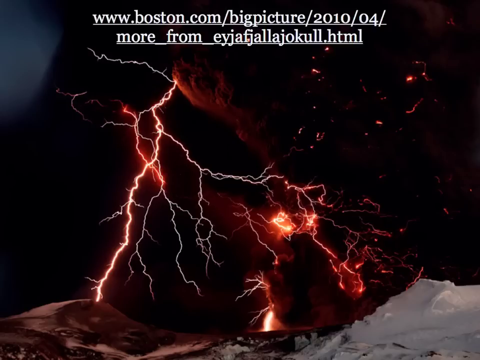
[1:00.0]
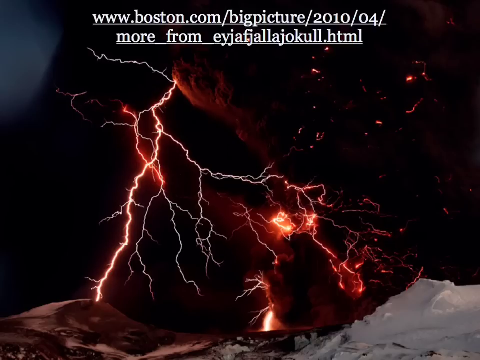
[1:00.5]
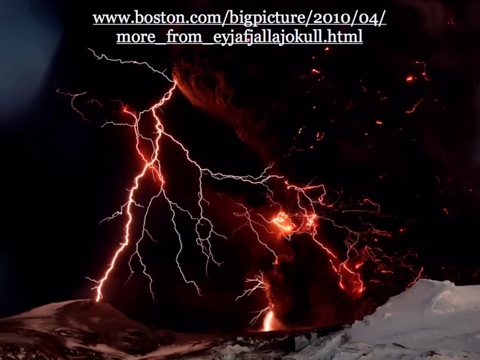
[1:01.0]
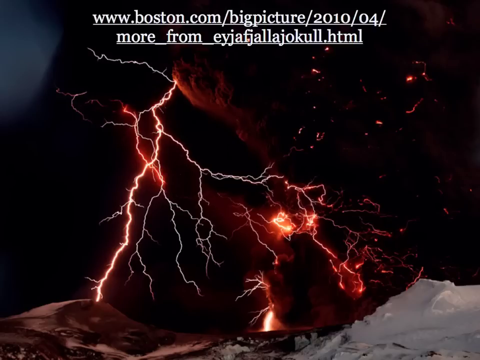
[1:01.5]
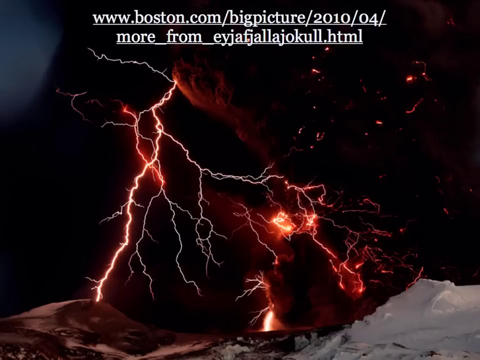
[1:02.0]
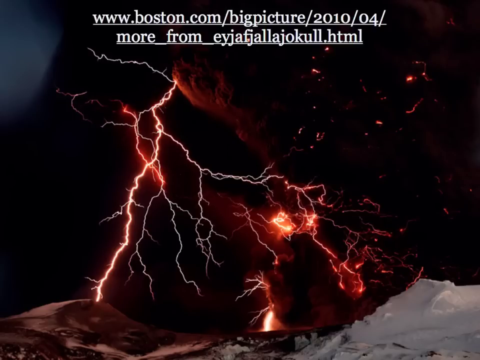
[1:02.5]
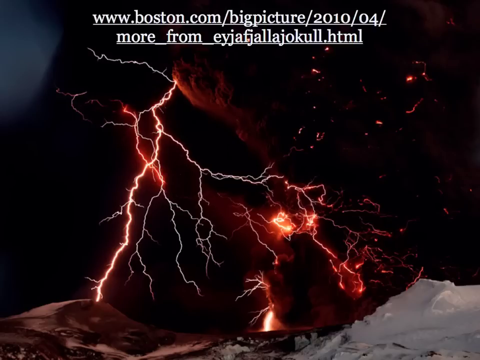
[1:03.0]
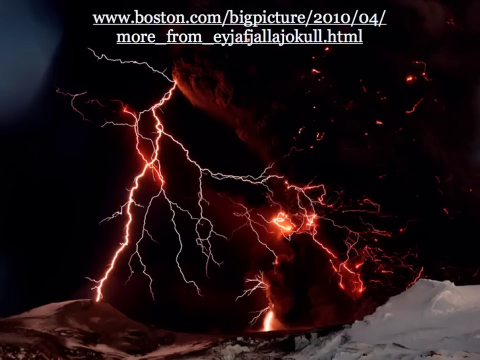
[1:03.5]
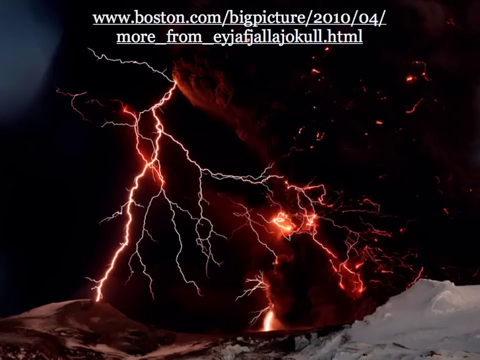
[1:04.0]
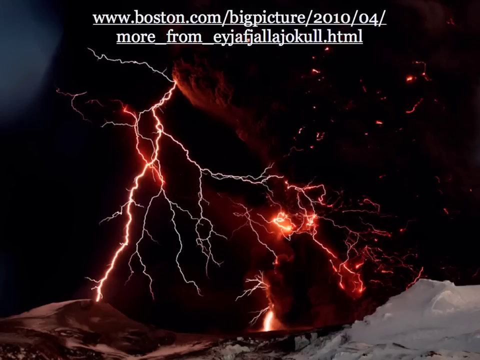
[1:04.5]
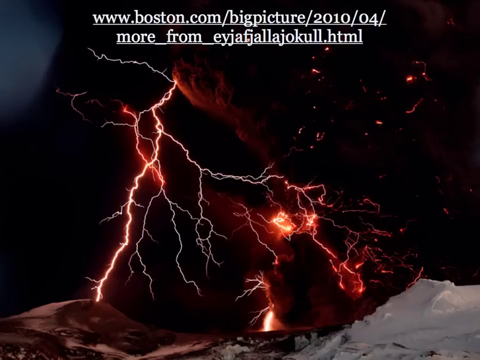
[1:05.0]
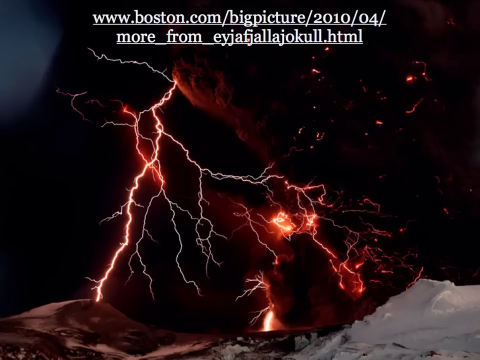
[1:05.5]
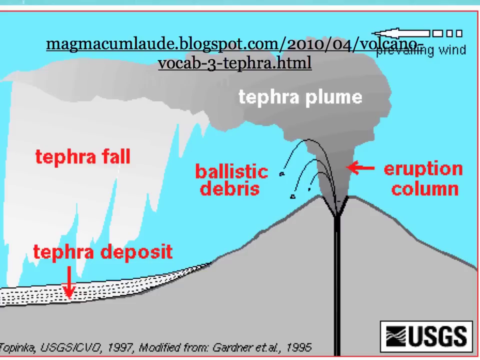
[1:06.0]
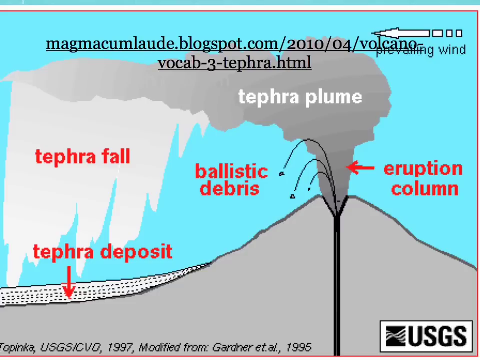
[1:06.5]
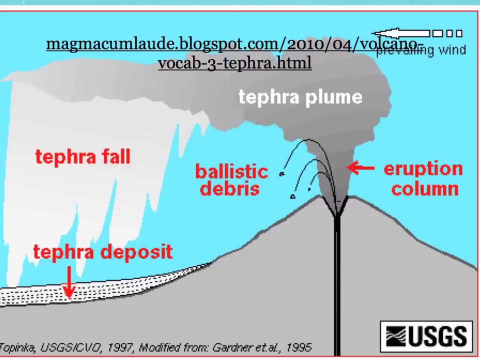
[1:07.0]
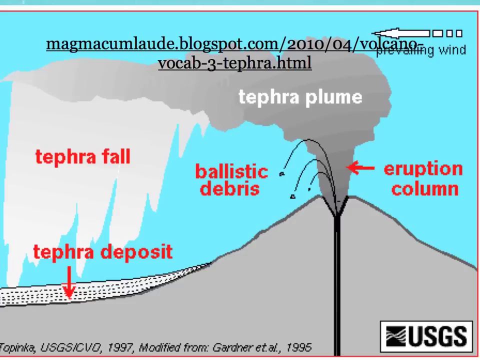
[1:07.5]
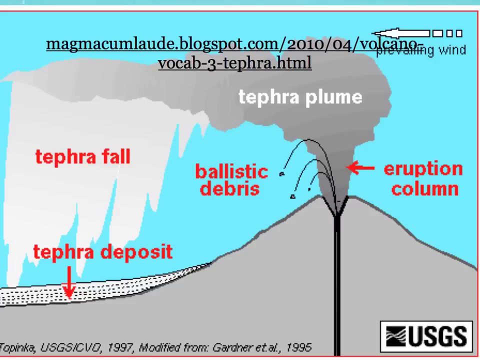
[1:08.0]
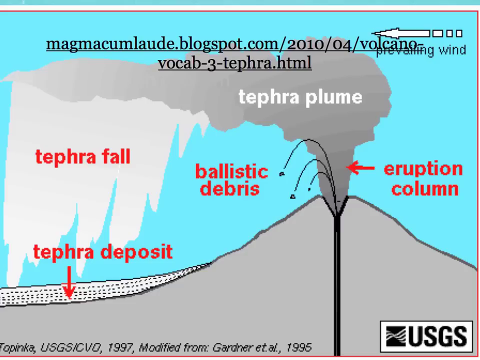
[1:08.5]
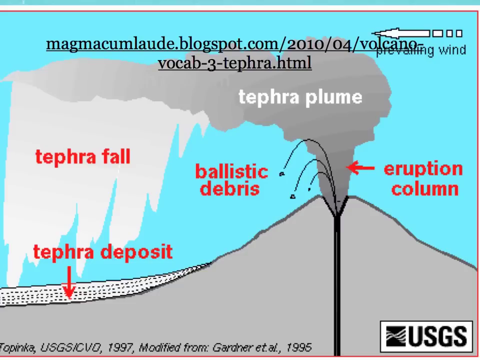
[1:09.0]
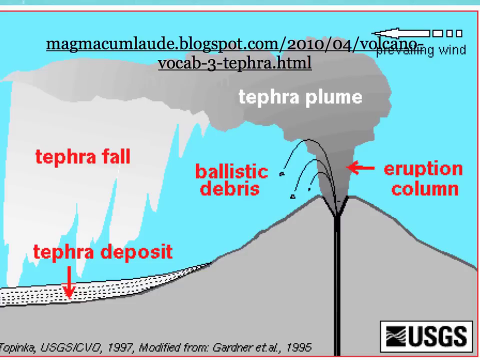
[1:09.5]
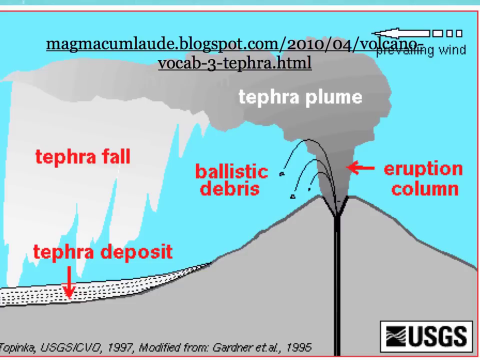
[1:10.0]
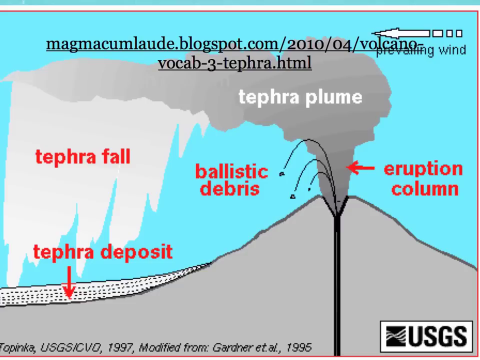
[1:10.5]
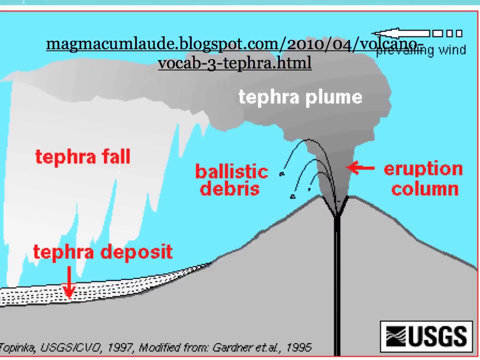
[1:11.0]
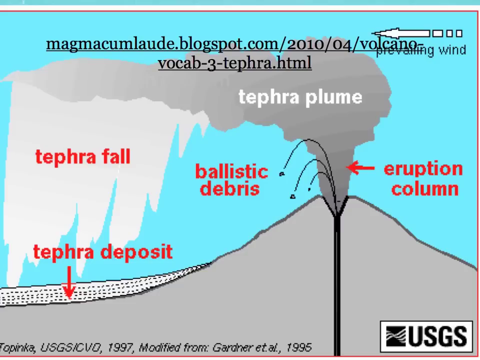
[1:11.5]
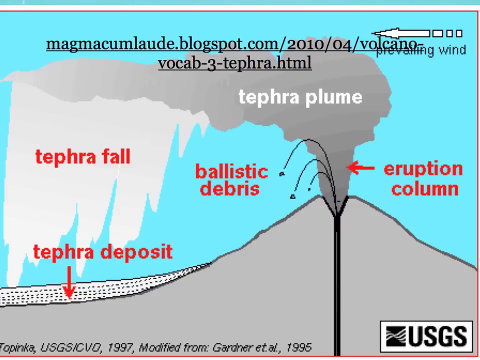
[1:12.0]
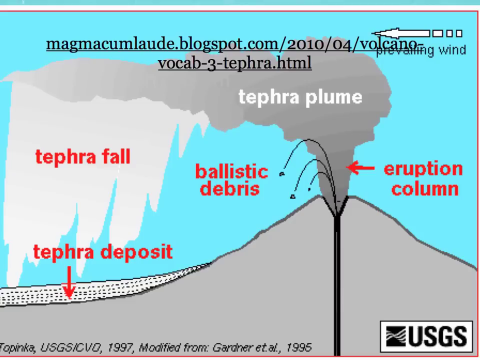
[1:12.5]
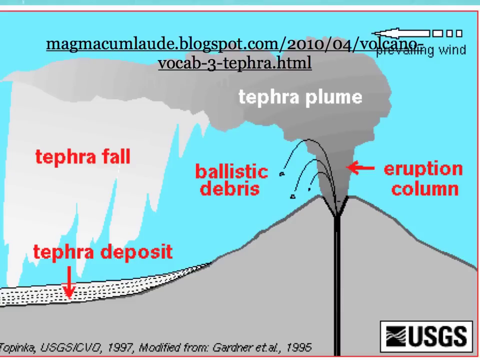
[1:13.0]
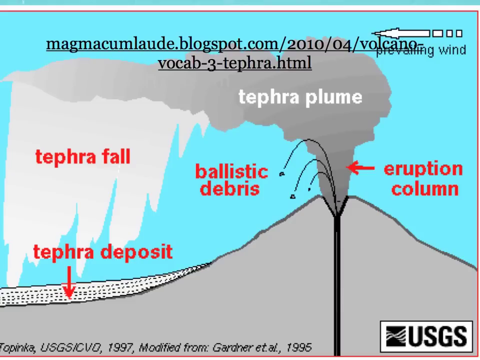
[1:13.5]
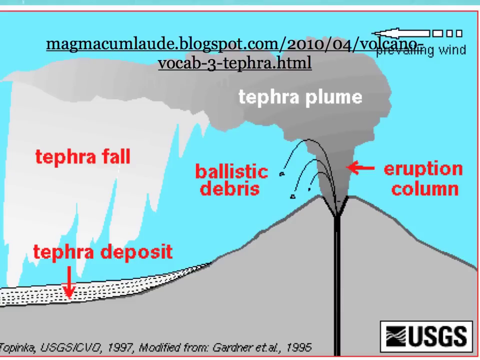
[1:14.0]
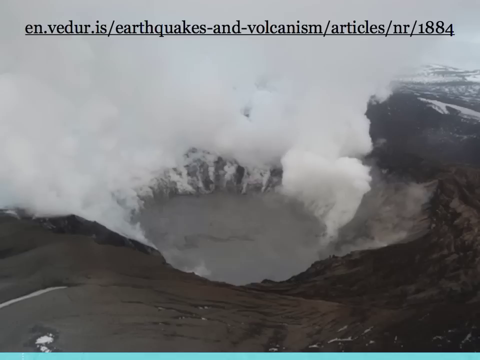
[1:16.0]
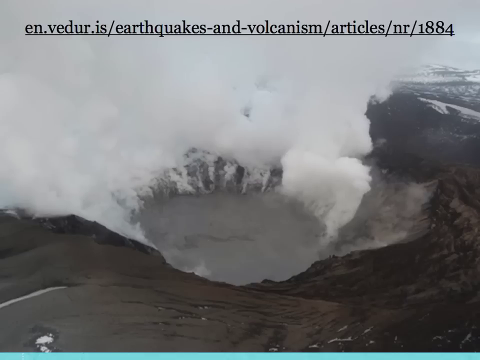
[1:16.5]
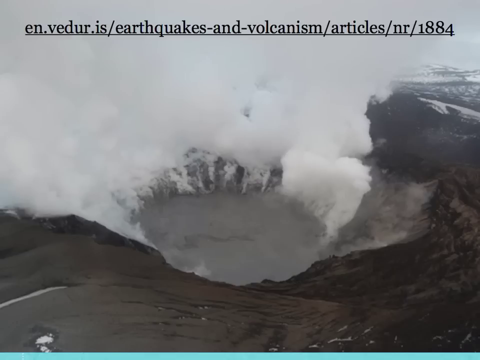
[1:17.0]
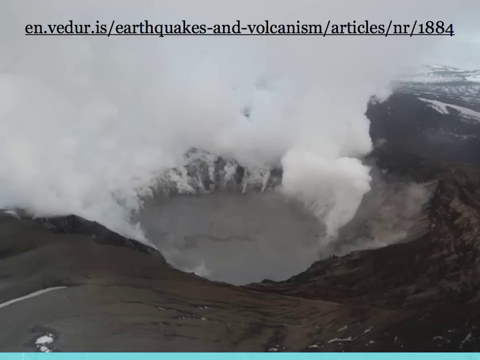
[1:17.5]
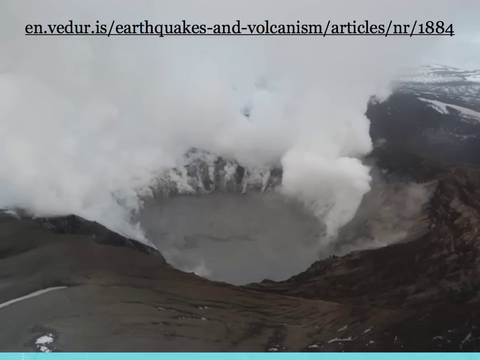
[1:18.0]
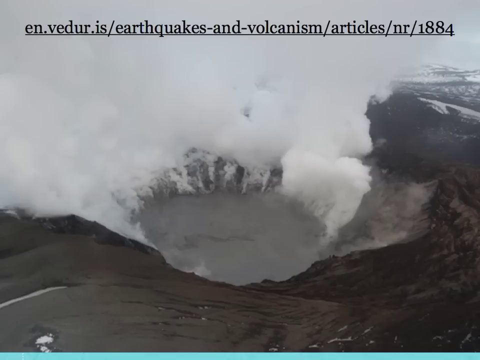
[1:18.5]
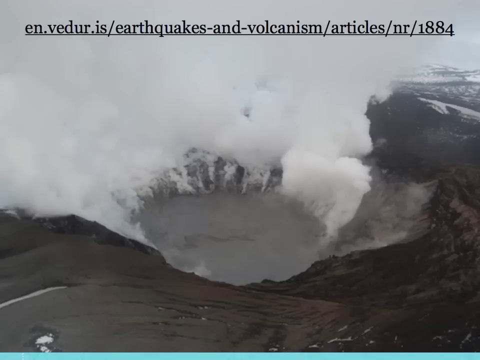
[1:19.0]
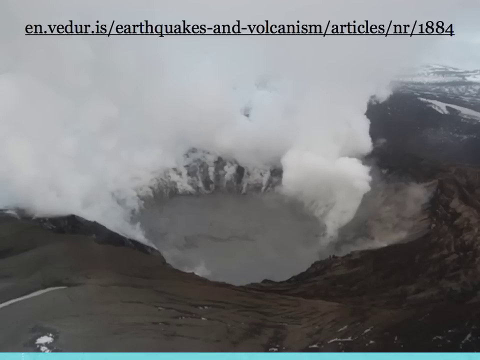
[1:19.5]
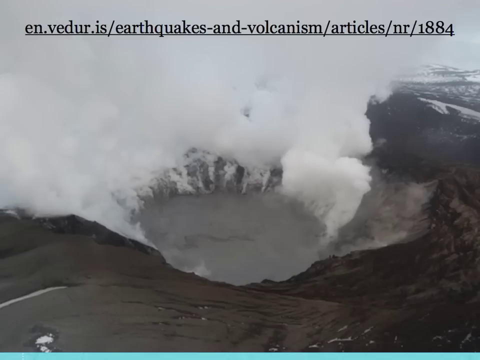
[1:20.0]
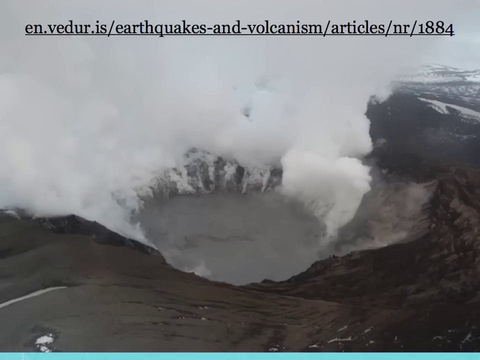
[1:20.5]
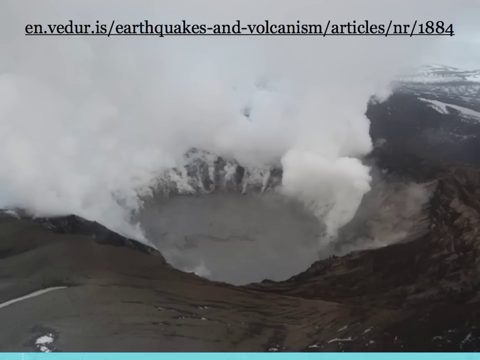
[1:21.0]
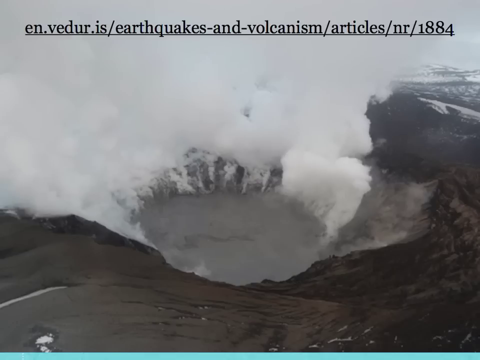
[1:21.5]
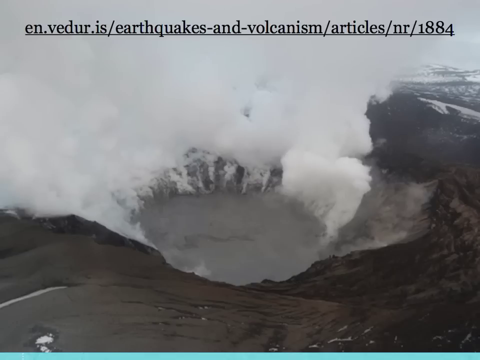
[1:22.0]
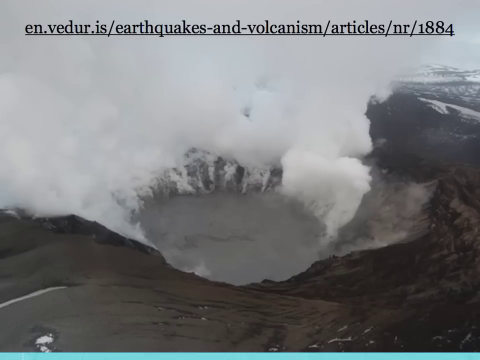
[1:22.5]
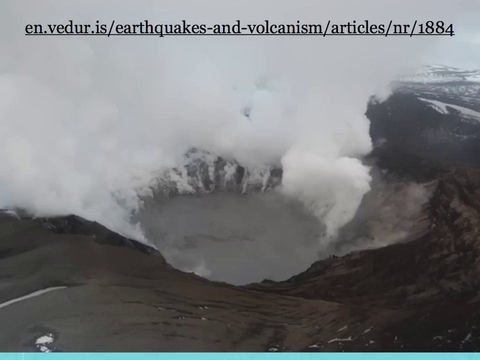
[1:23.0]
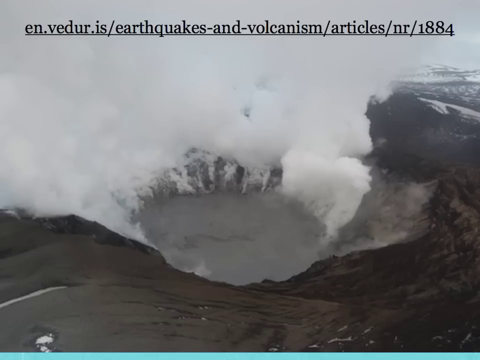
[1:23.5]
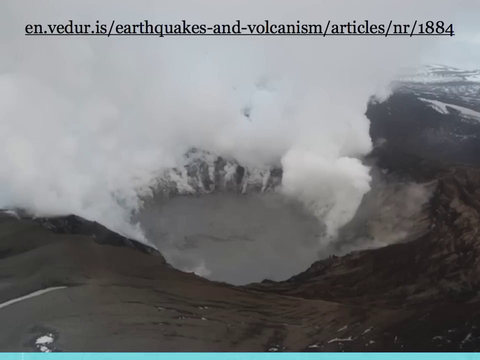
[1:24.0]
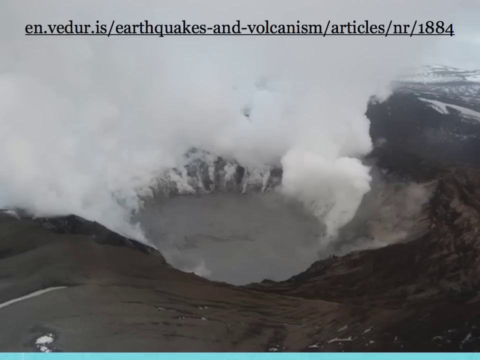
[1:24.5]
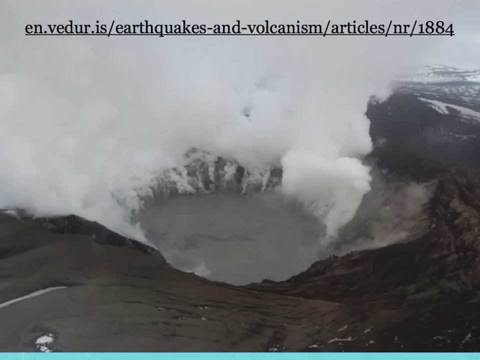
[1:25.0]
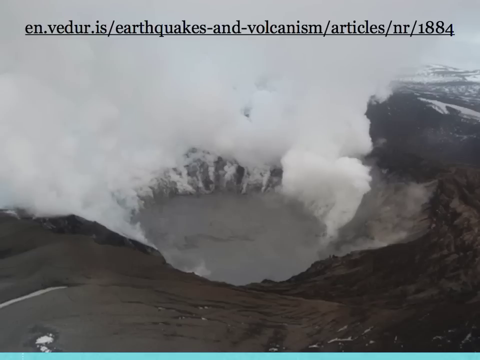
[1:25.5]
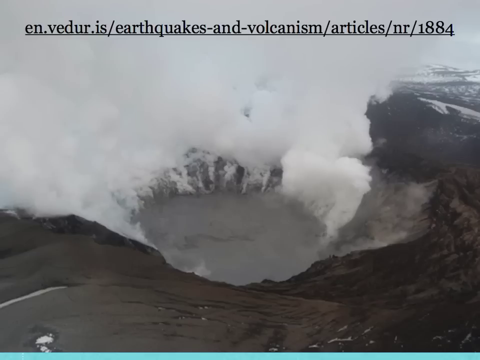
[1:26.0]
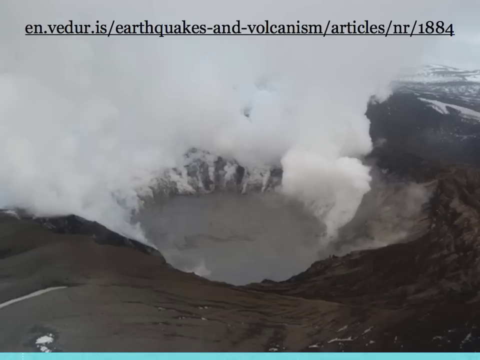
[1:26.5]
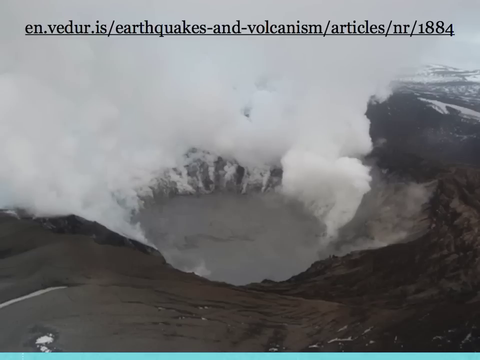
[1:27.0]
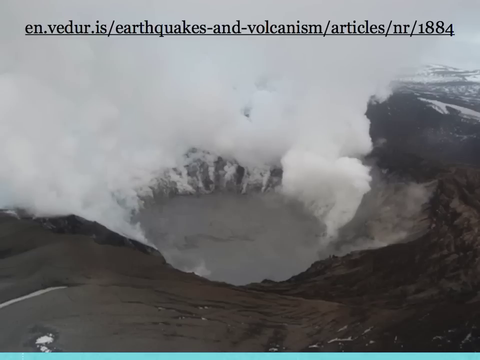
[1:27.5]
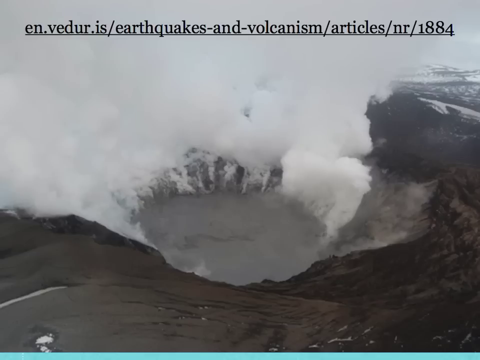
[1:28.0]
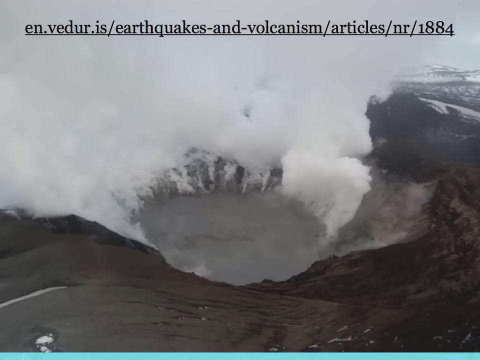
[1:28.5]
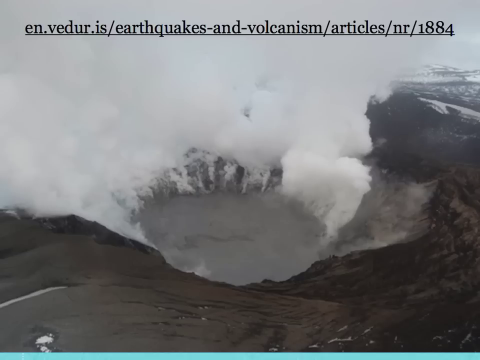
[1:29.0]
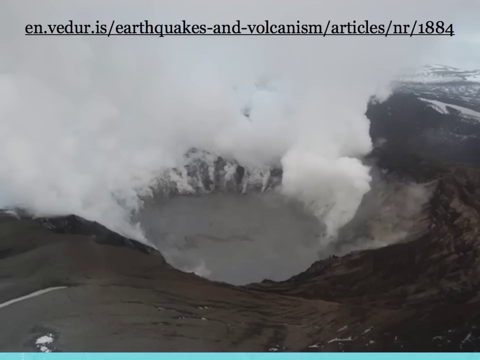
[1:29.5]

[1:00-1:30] An image shows a dark background of black and red. It appears to be either spidering cracks of a lava flow seen from above or lightning in the sky, in red, lighter red and slightly darker red, and it looks like arcing lightning. White text at the top of the image sources it. The image changes to one with a light blue background and a source in black text at the top. It is a very basic drawing in grays and black showing a volcano at the bottom right erupting gray smoke that trails off to the left across the image and then falls down into white. Over the white, red text reads "tefra fall". Below that, on the ground, it reads "tefra deposit". Over the smoke near where the volcano spurts it out, it reads "tefra plume". To the left, red text reads "ballistic debris". On the right side, it reads "eruption column", with a red arrow pointing to the smoke. The image then changes to a black and white one with a mostly grey look. A source is cited in black text at the very top. The image shows white smoke billowing out of a rather large grey hole or circle in the center near the bottom, and the soil or ground around it looks black. It is a volcano.